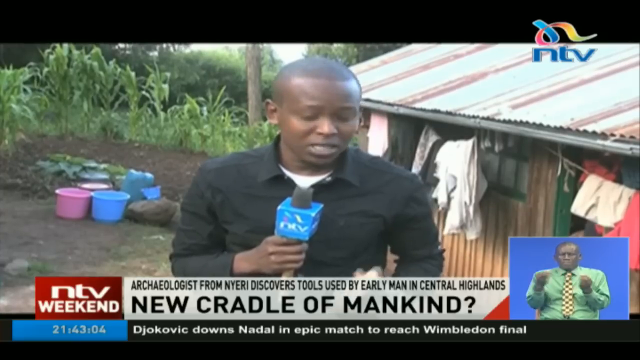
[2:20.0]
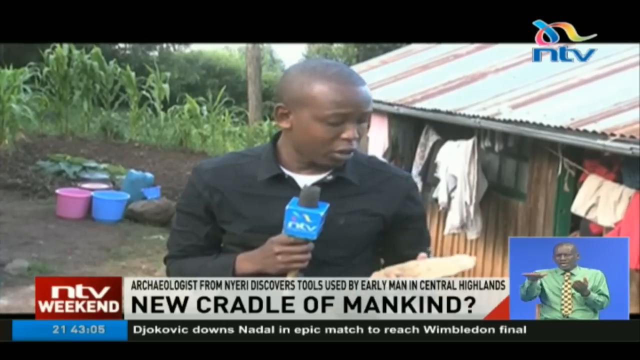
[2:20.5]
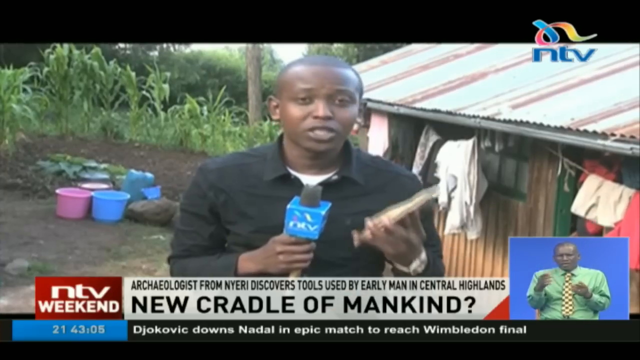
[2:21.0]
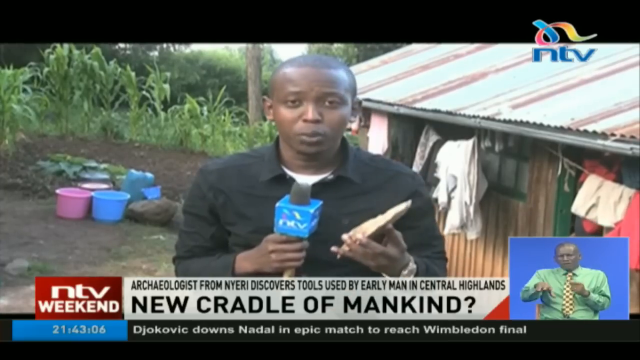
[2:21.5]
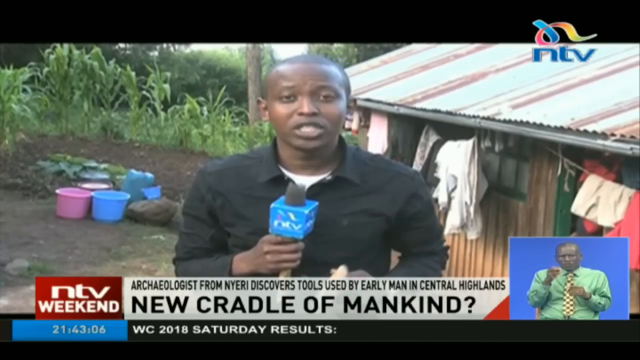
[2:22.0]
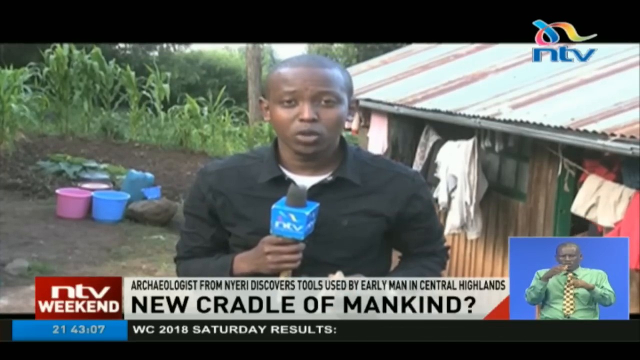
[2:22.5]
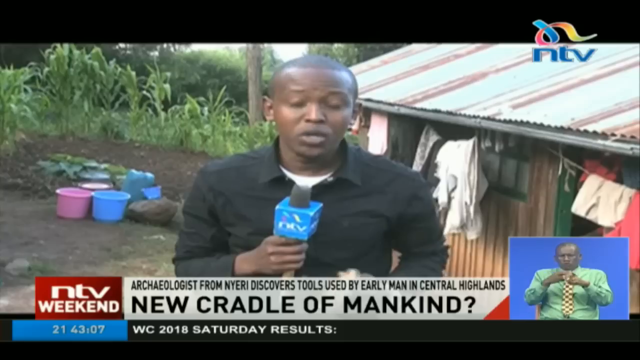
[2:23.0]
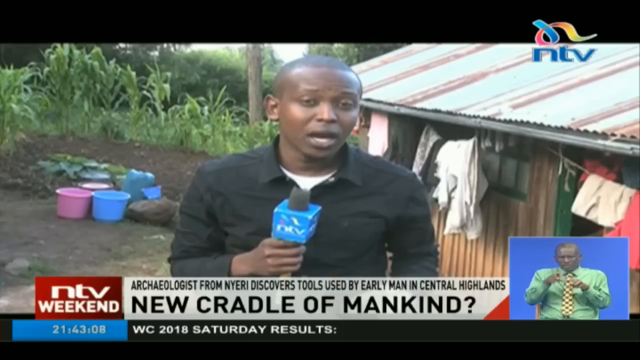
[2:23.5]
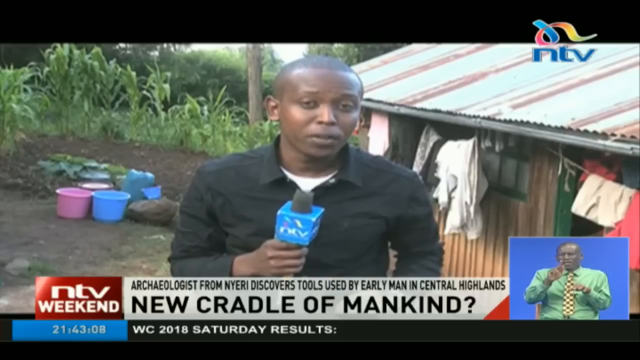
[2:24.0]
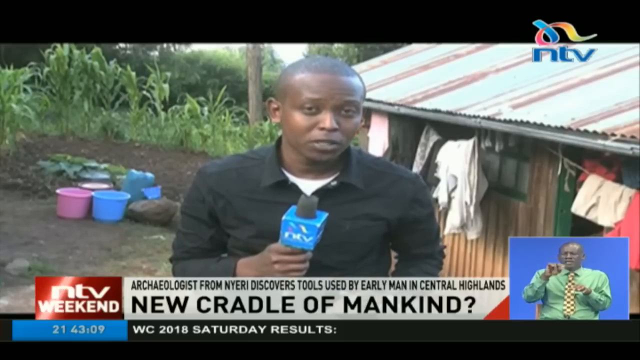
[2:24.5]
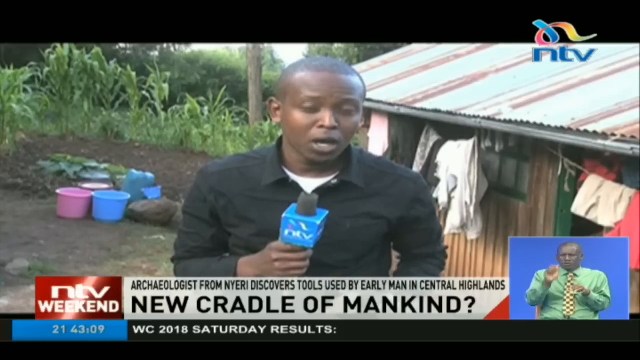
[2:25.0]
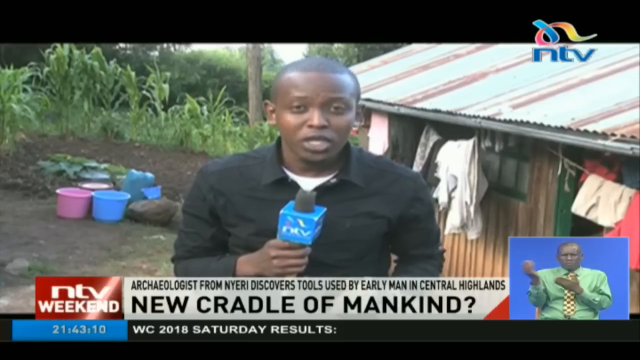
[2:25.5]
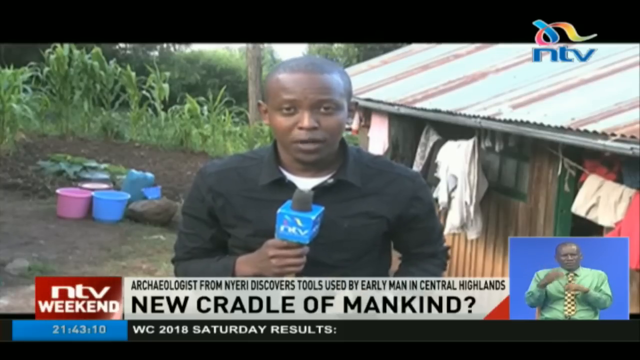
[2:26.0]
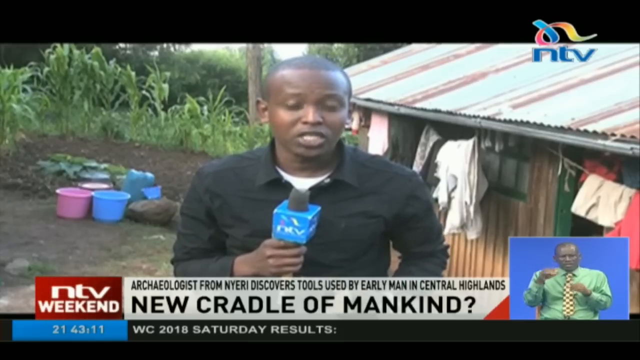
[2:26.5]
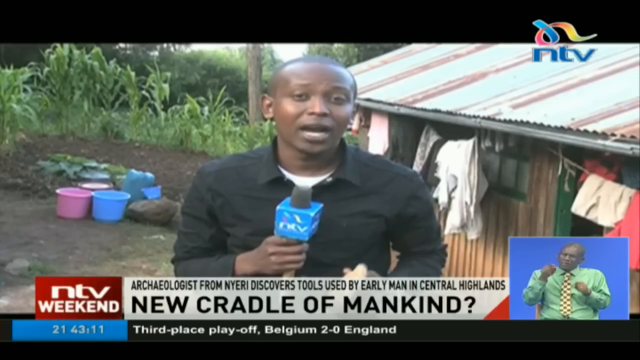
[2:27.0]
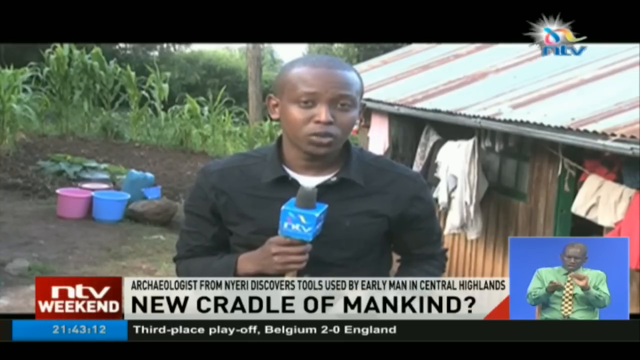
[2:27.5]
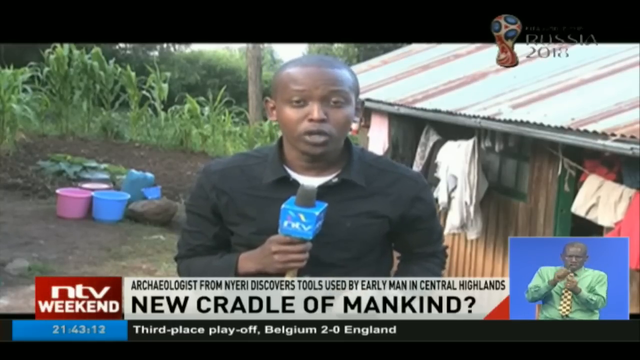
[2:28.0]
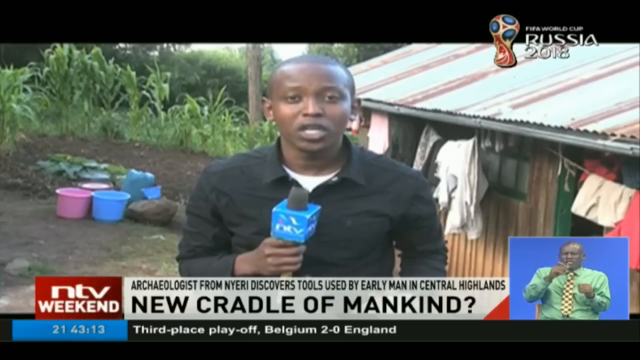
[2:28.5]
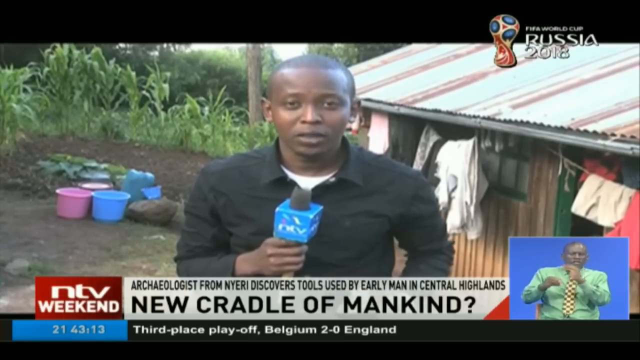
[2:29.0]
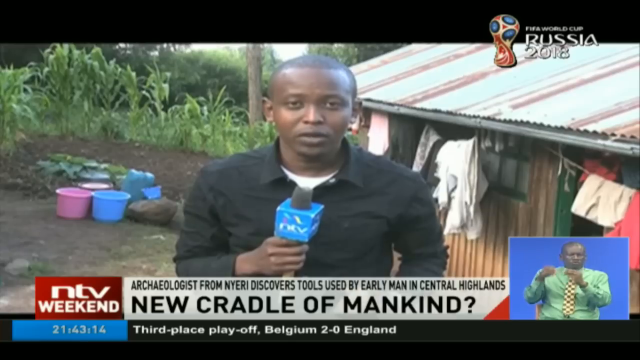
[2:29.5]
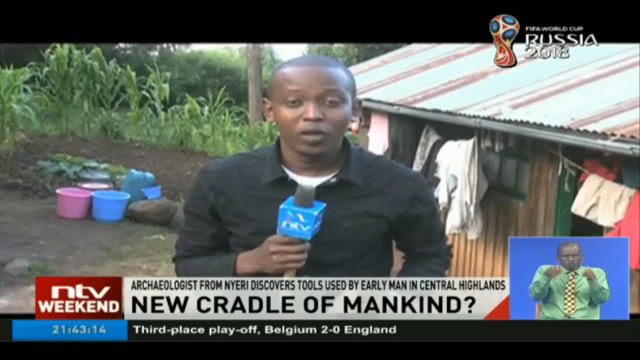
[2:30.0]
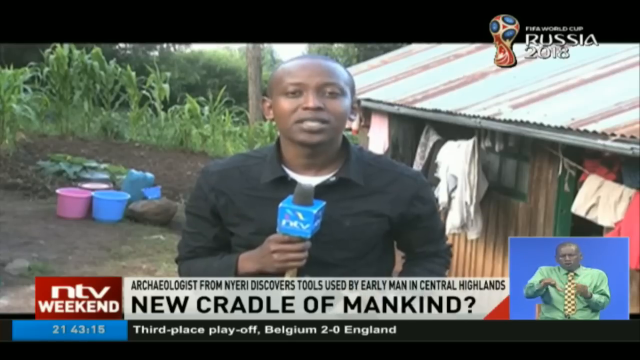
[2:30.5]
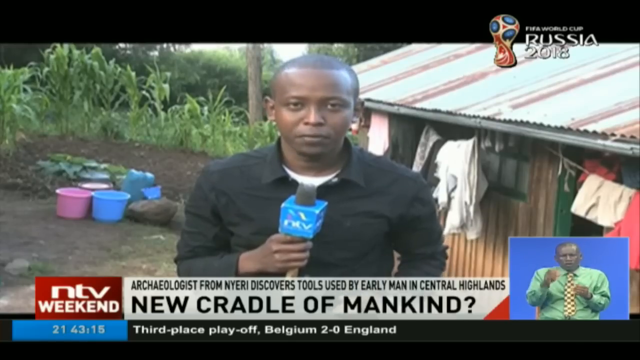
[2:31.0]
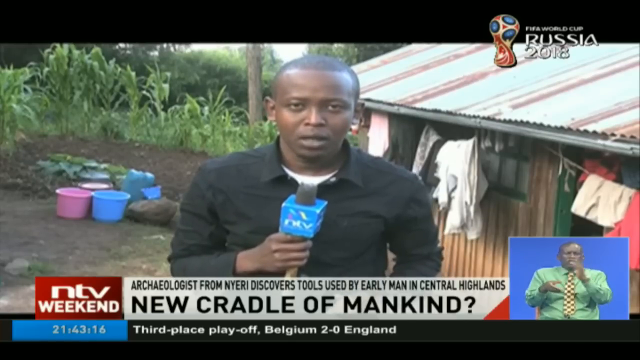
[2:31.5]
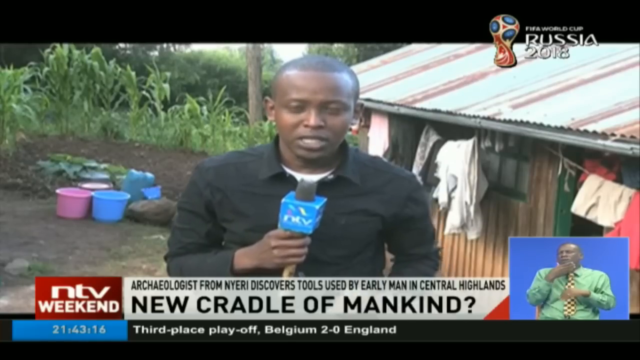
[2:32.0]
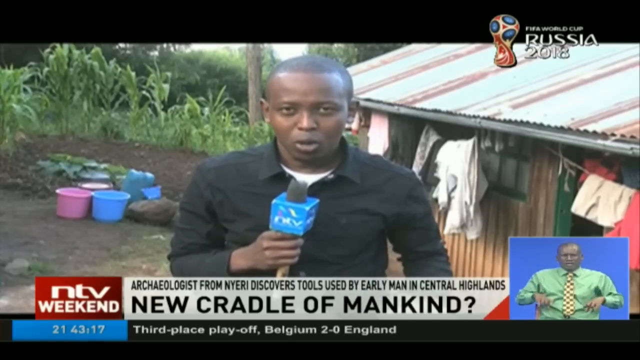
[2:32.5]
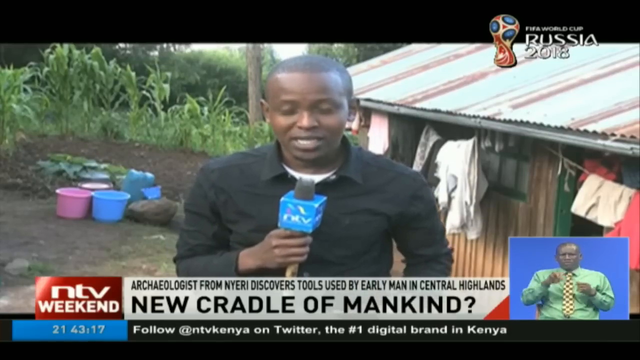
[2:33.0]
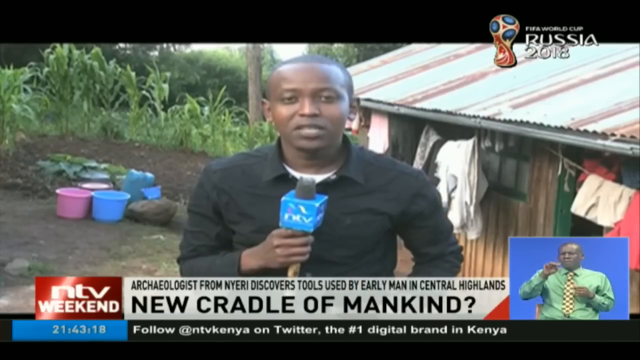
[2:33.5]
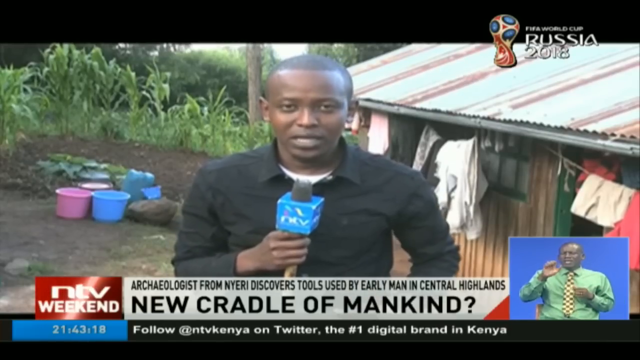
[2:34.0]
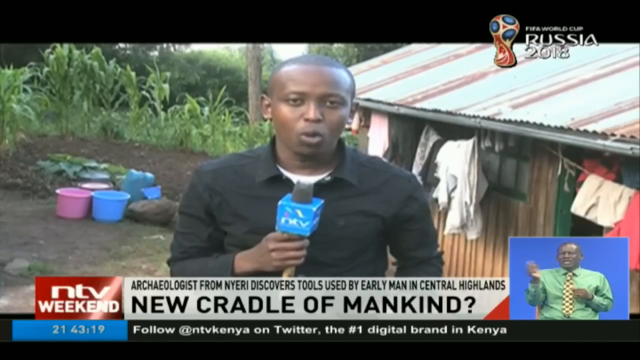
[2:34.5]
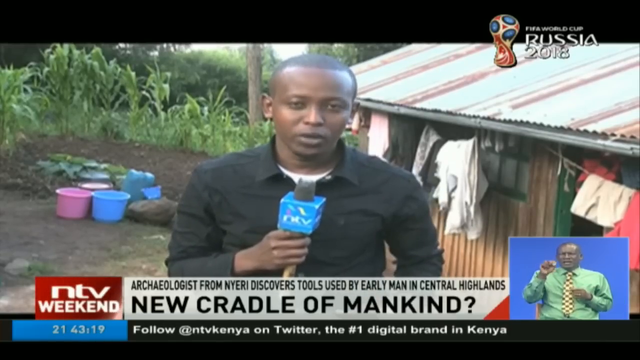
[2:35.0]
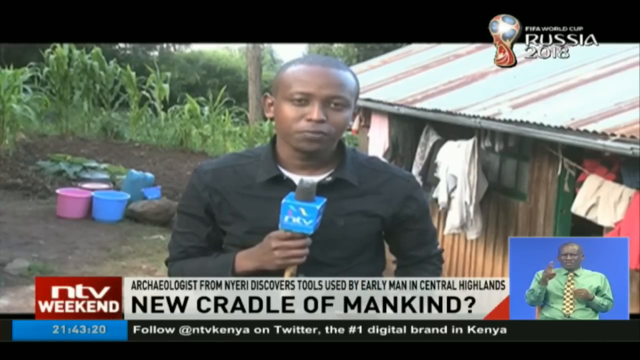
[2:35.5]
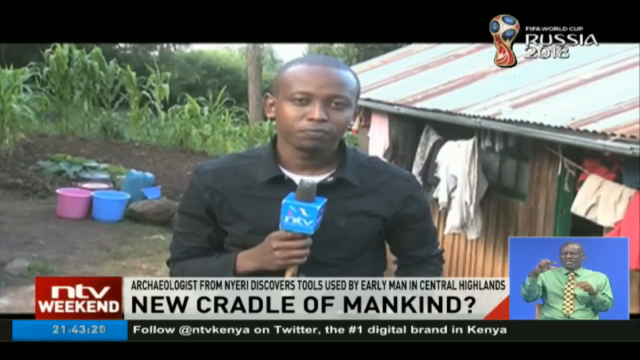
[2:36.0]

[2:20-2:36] The video is still about the cradle of mankind and tools made long ago, apparently around 3,000 years ago, and refers to Central Africa and Senegal.